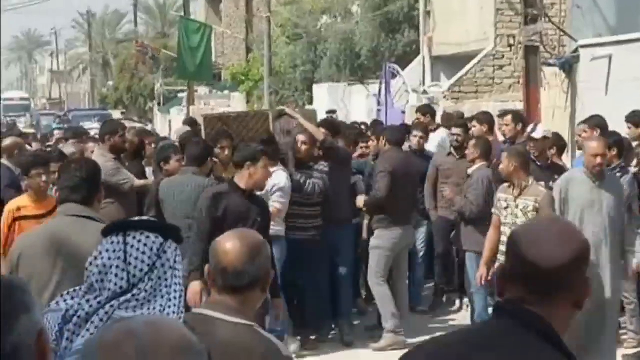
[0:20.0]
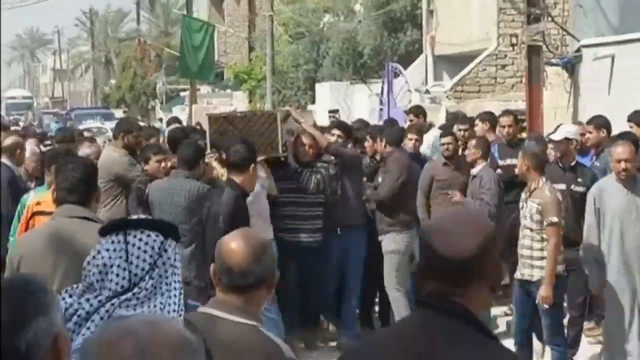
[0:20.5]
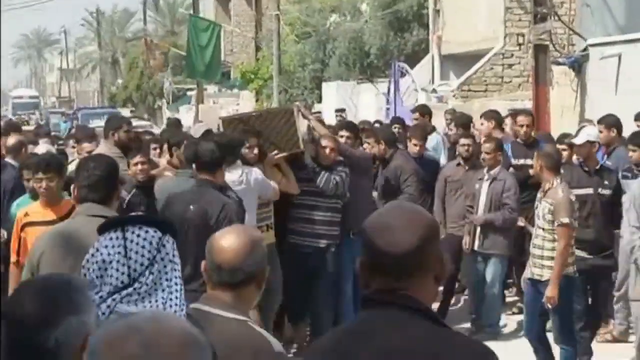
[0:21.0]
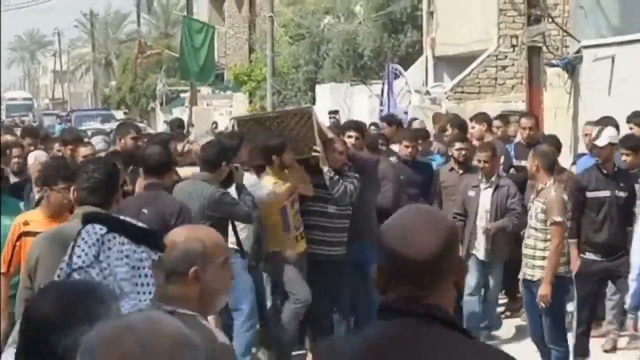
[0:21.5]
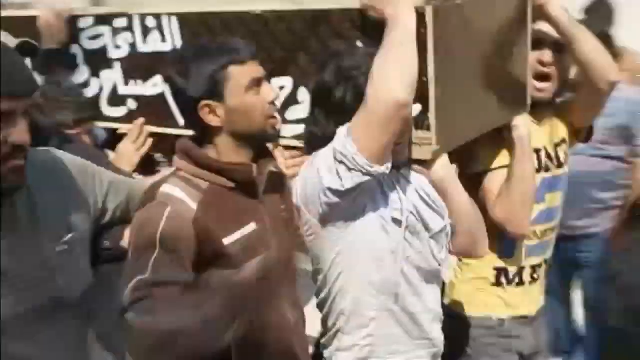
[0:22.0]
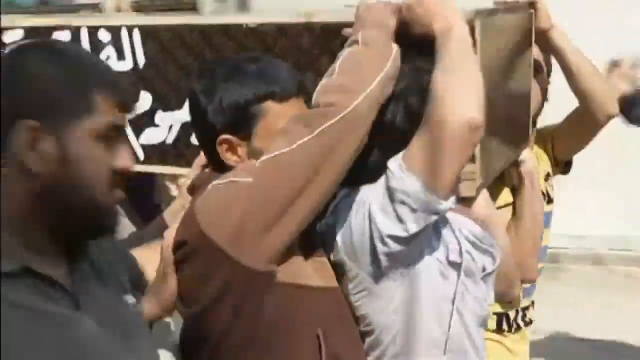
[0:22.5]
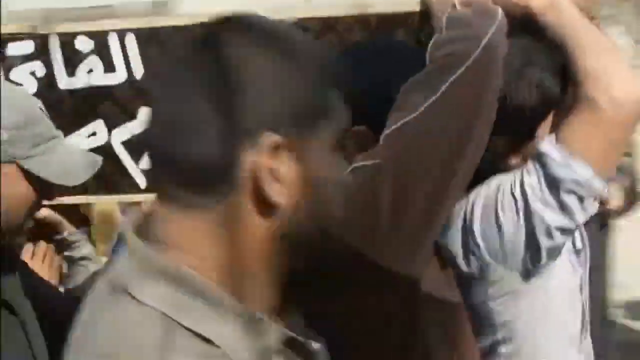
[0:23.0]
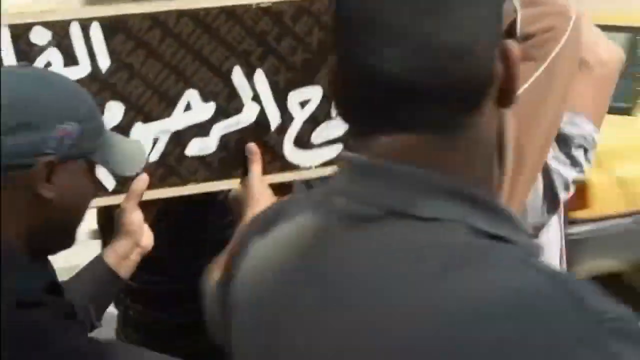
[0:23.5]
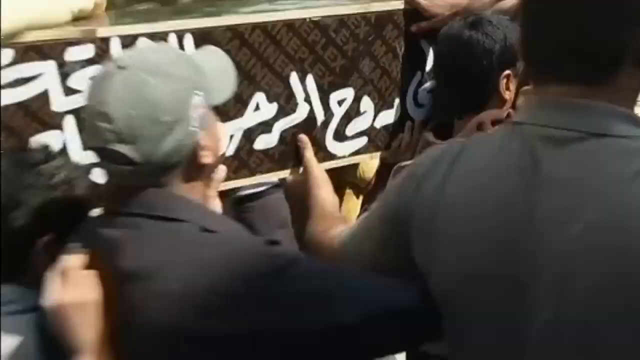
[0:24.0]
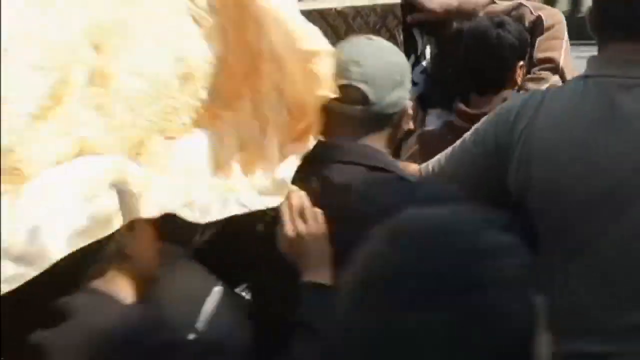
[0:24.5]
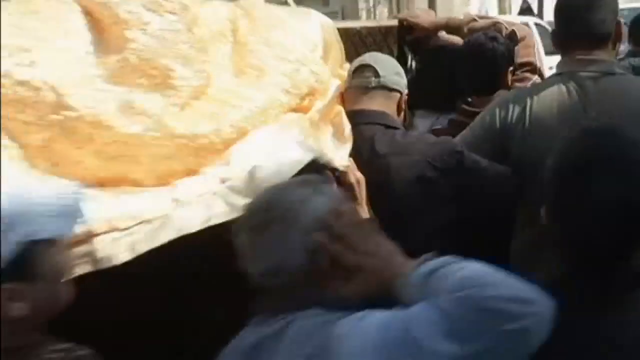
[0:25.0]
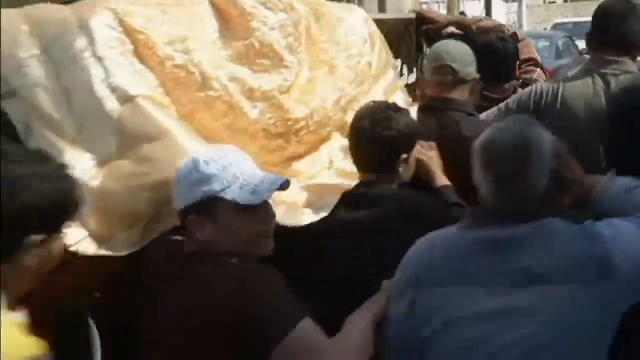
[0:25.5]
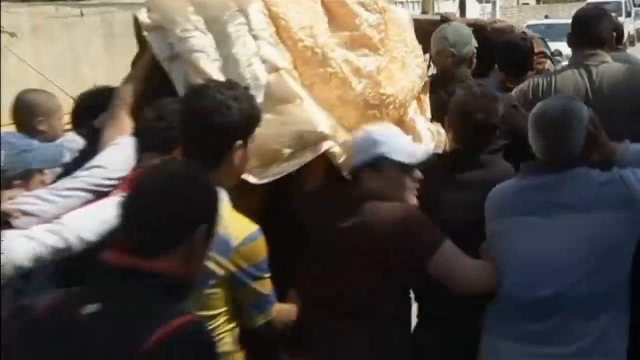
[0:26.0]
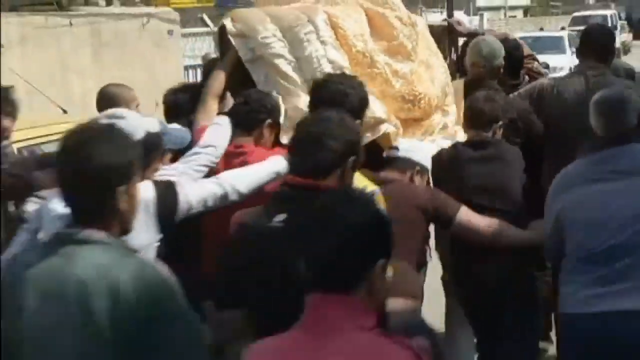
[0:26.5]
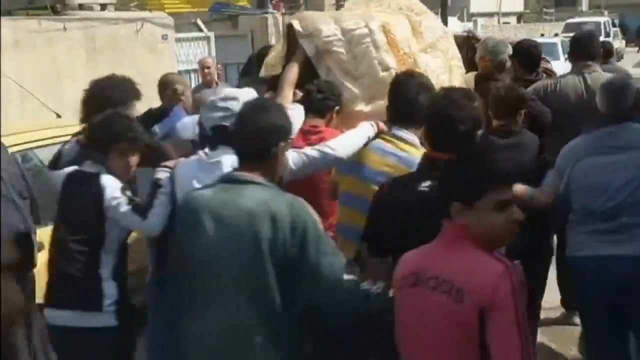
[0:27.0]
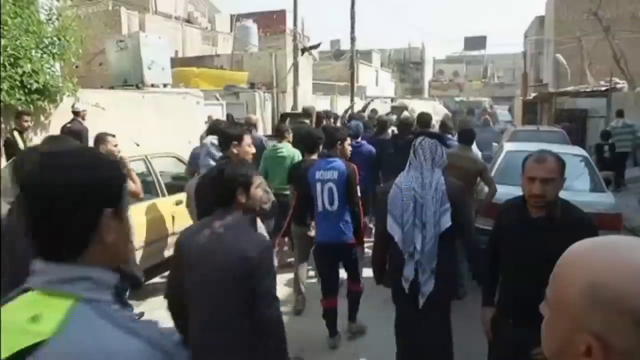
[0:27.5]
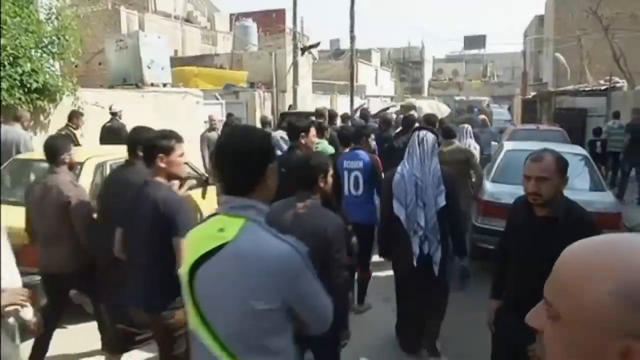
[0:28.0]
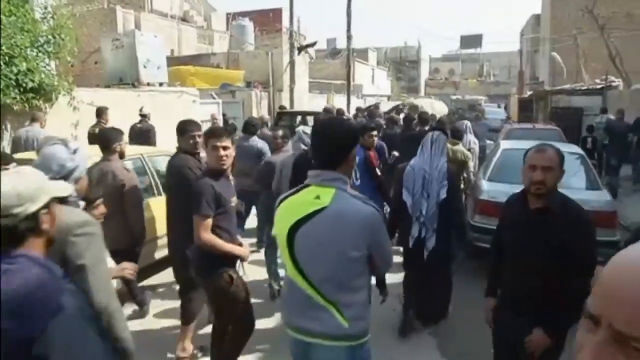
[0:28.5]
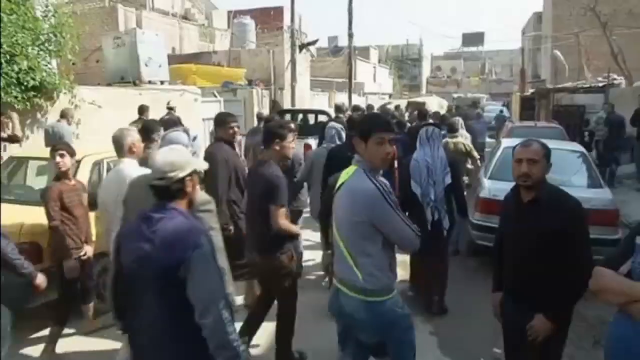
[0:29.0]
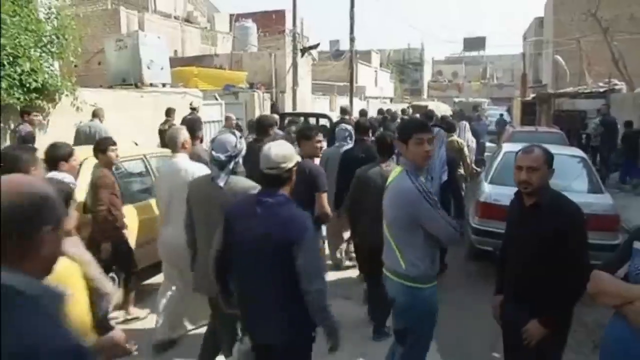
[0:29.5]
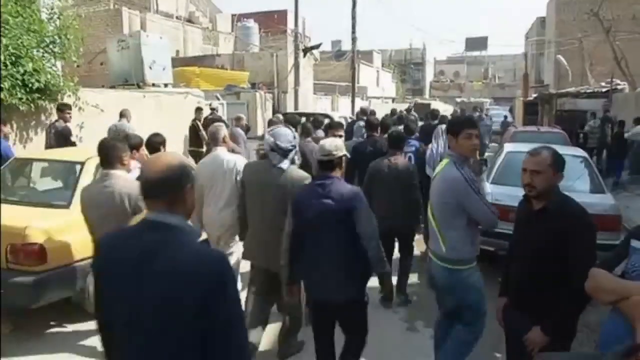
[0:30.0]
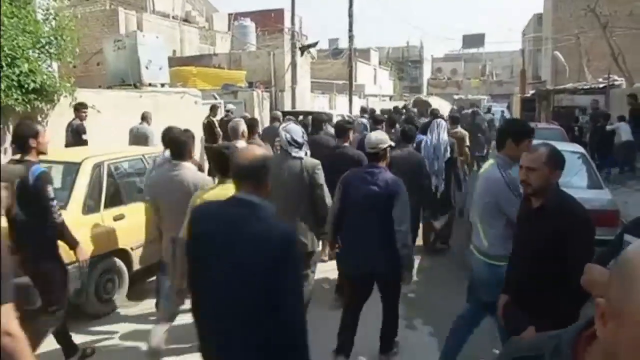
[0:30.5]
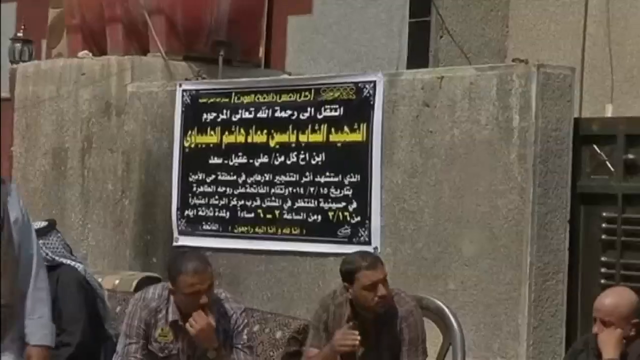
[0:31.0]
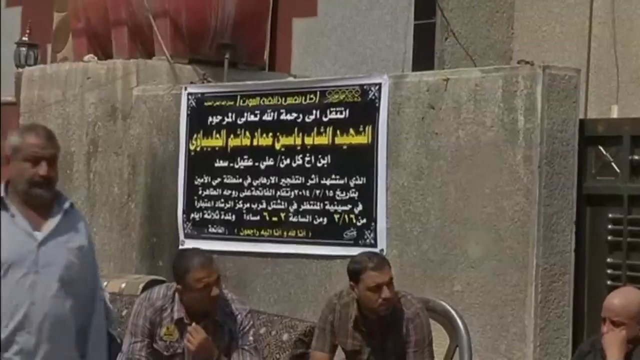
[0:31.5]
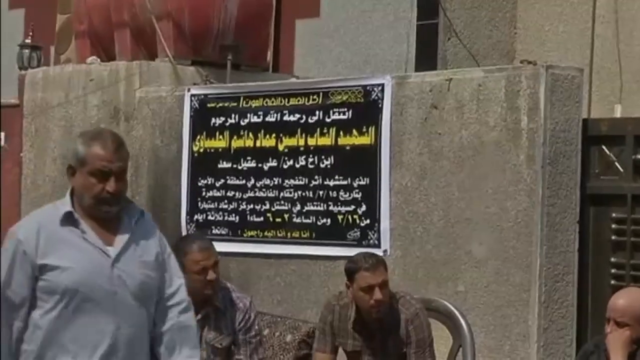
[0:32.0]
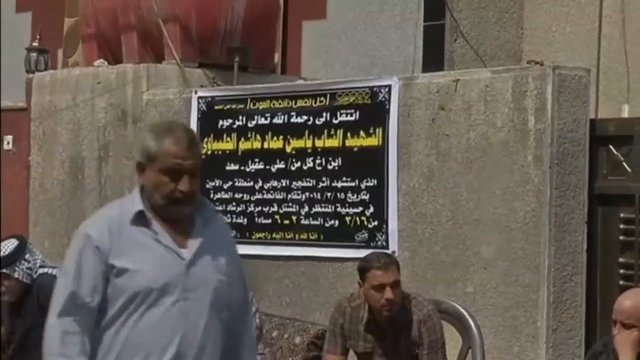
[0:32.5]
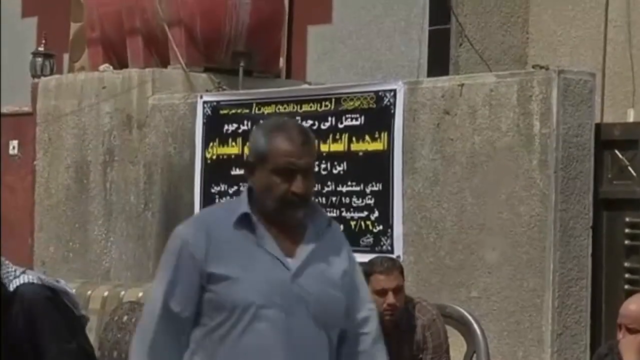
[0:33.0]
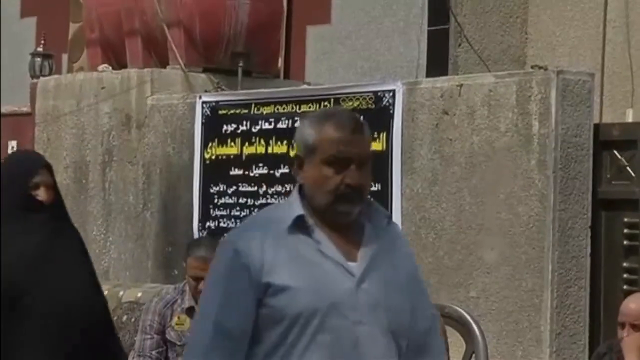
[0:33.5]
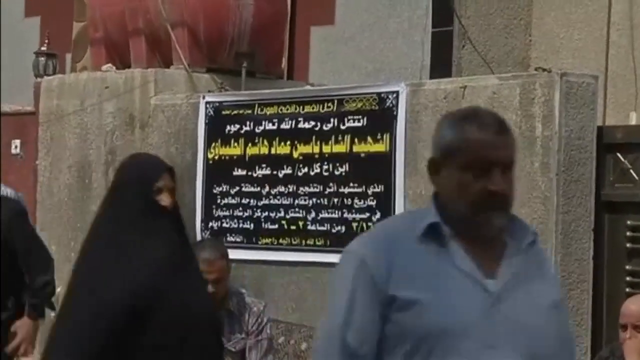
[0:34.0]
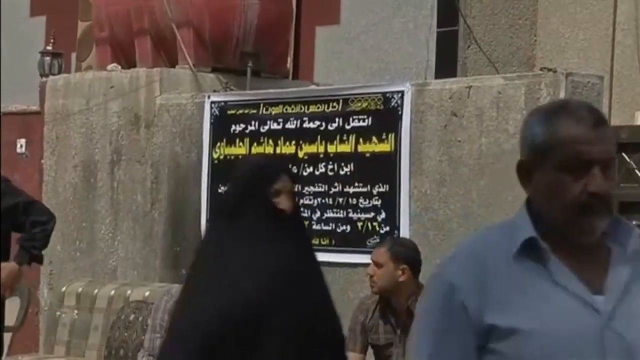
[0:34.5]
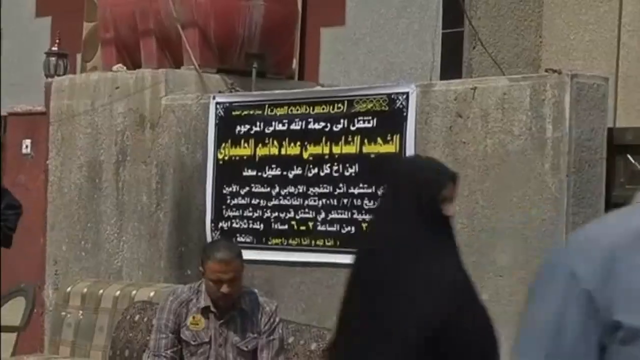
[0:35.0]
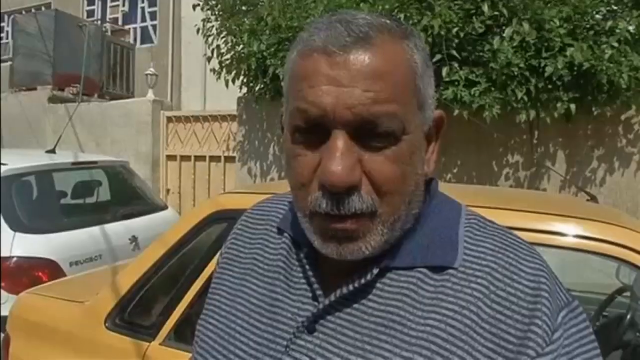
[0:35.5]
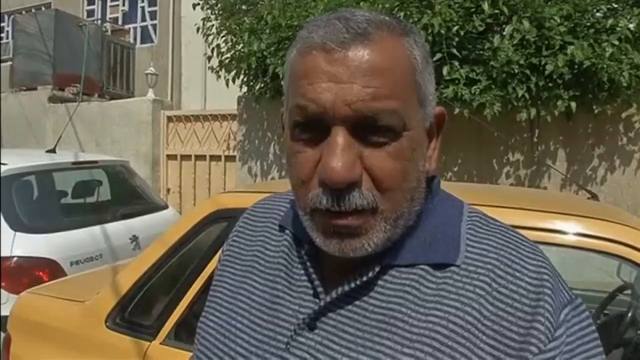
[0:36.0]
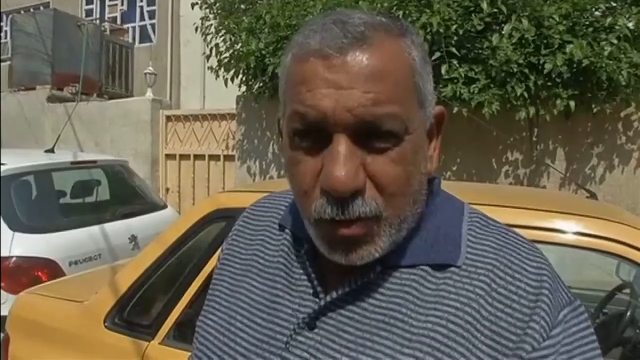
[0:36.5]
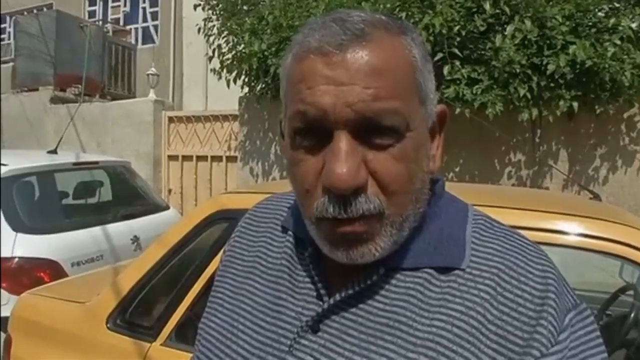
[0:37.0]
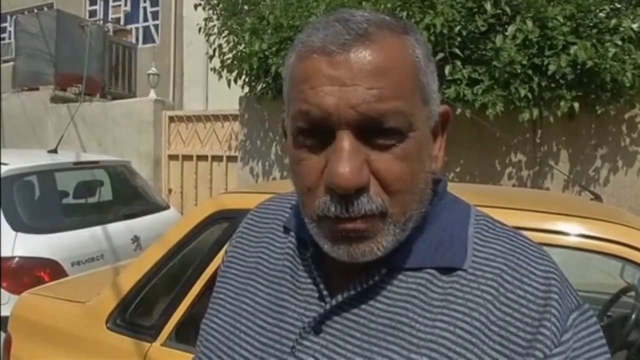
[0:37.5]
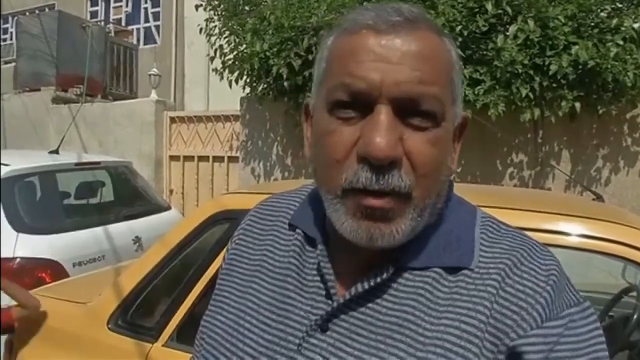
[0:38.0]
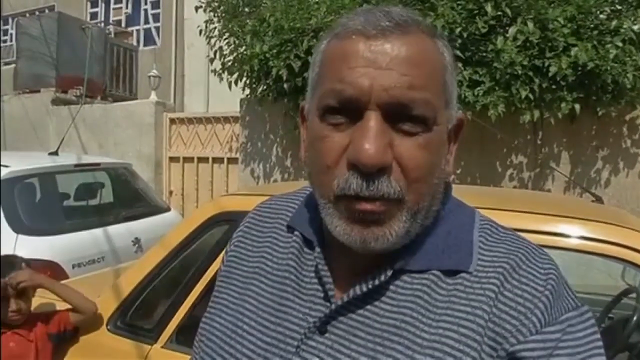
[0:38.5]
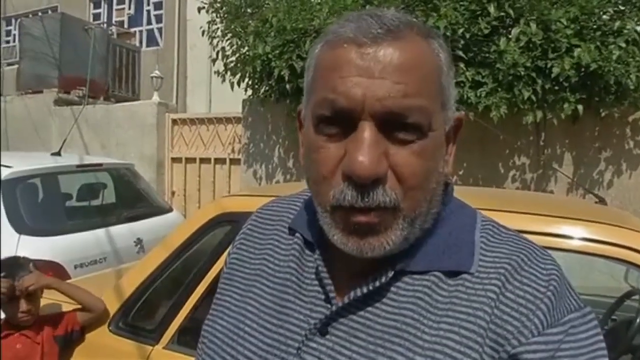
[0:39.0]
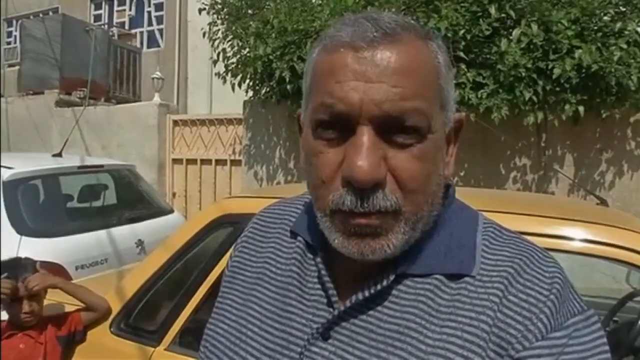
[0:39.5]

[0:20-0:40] People carry the black casket with white Arab writing on it. The view changes to a closer shot of the men carrying the casket to the right. A large crowd of men surrounds it, and there is some sort of white, almost light yellow blanket on top of the casket. A different, further backed-out angle shows that the crowd is very large, with many people marching through the city, which is in a third world country; the buildings are very old. The scene changes to a sign posted on one of the buildings with Arab Middle Eastern writing on it, and people walk to the right. The scene then changes to an old man with gray hair in a striped white and blue shirt who is talking and being interviewed. Behind him is a yellow car, and in the background to the left is a white car.